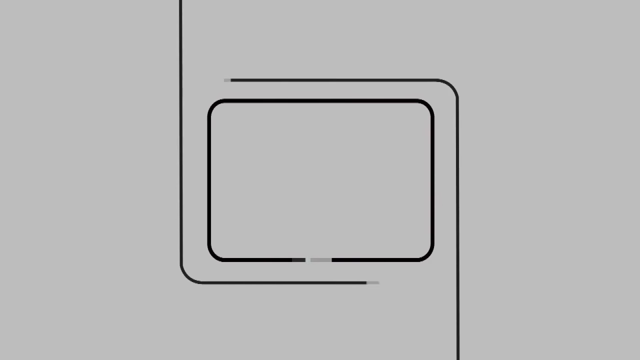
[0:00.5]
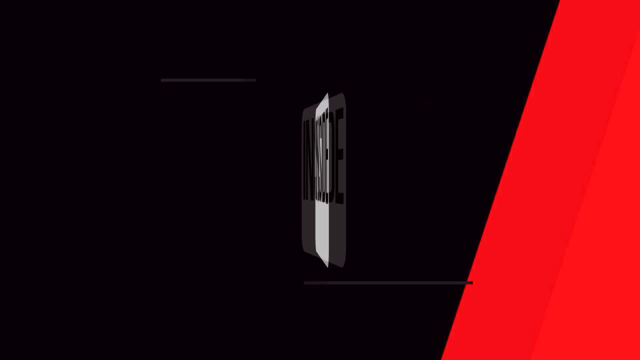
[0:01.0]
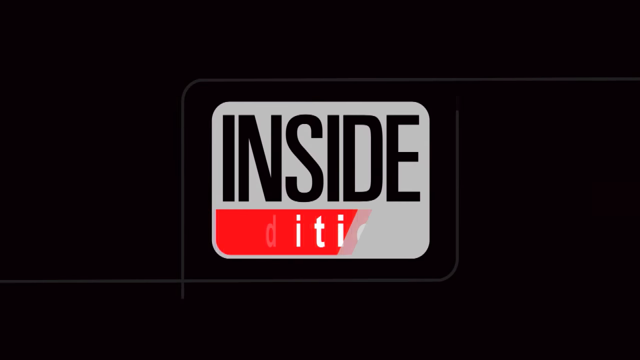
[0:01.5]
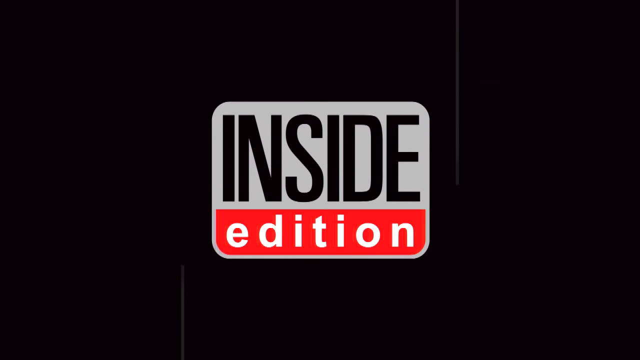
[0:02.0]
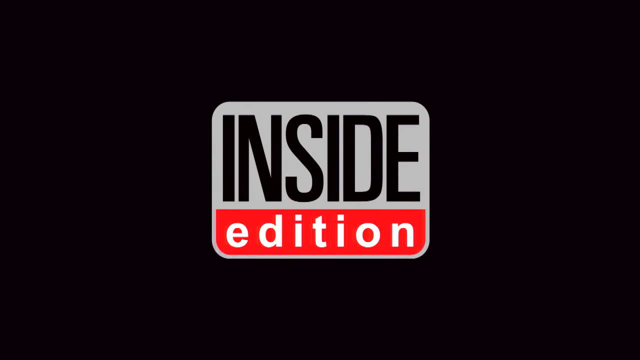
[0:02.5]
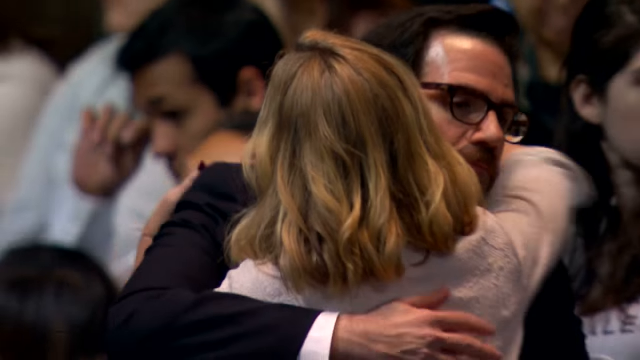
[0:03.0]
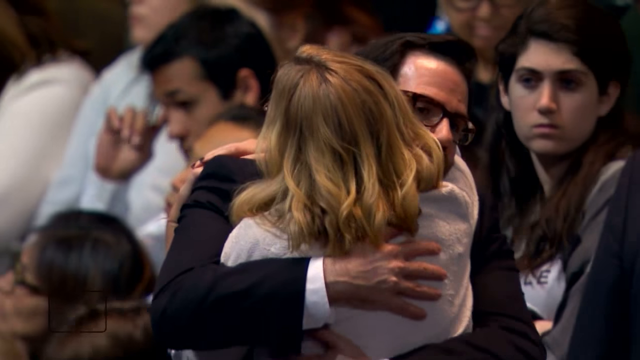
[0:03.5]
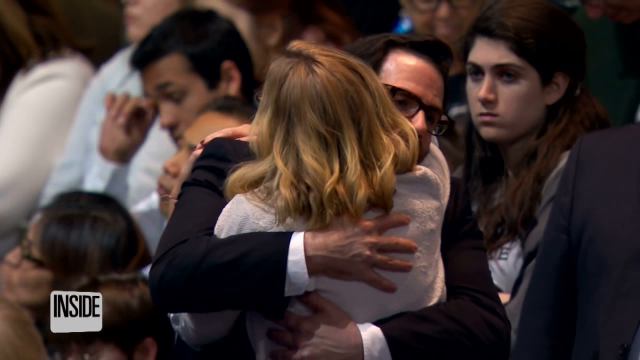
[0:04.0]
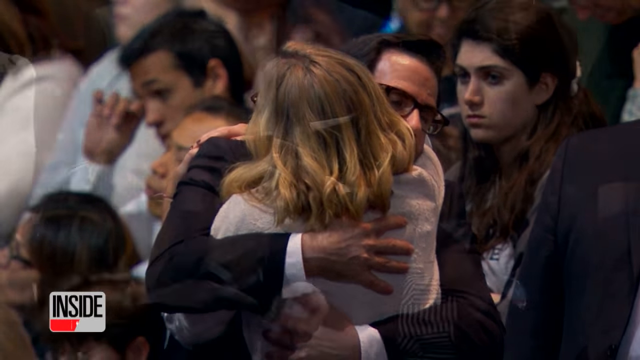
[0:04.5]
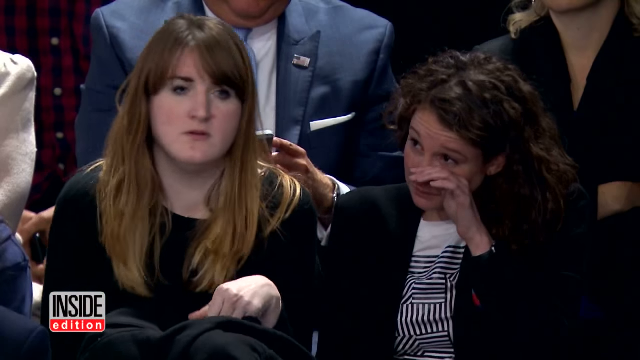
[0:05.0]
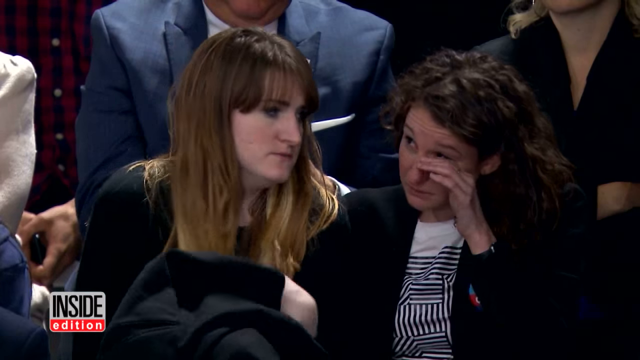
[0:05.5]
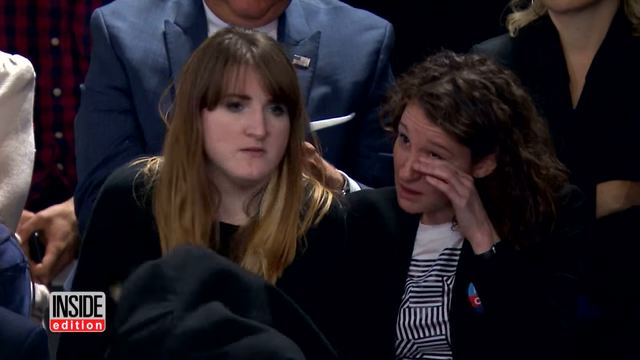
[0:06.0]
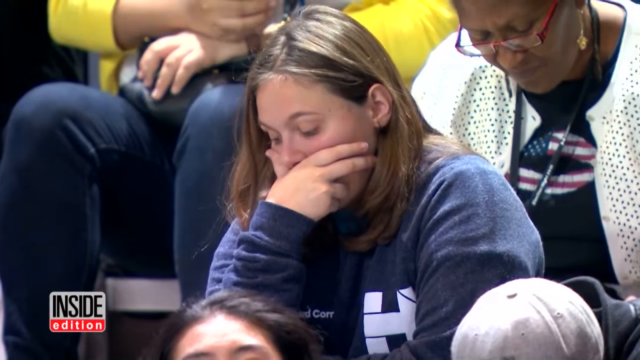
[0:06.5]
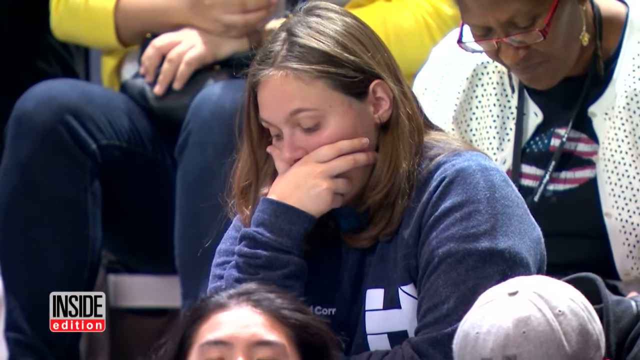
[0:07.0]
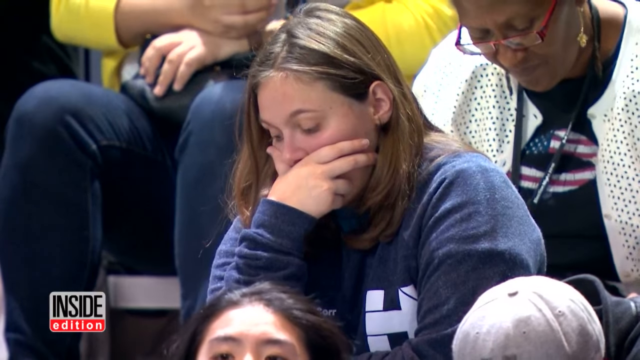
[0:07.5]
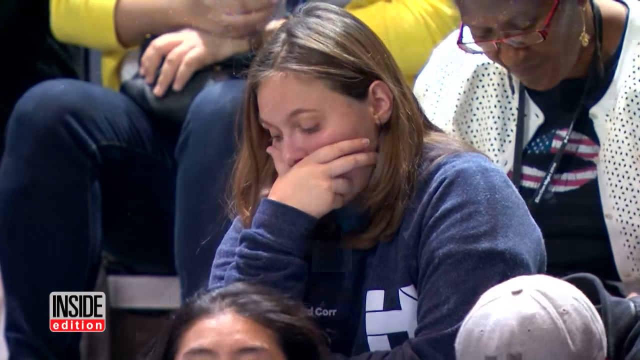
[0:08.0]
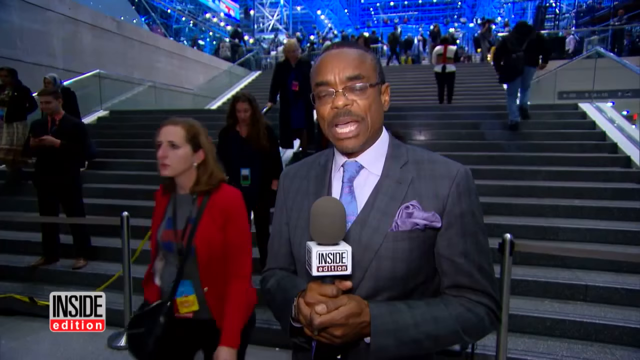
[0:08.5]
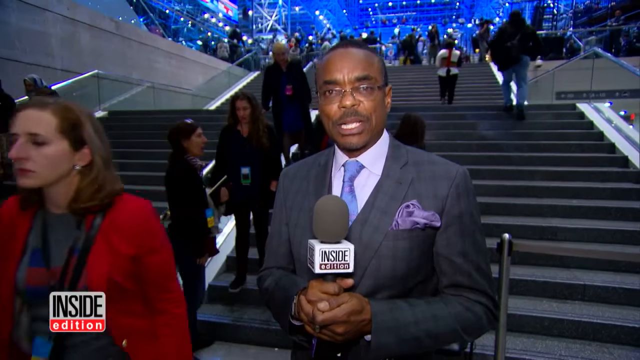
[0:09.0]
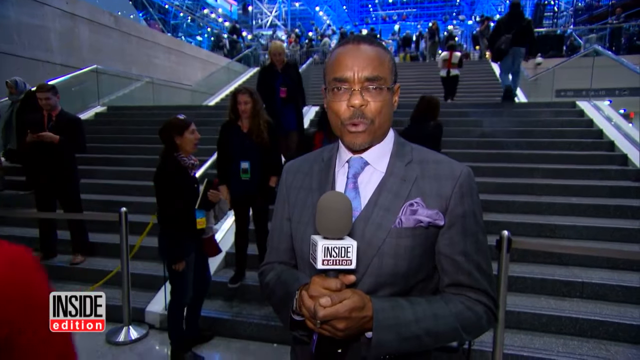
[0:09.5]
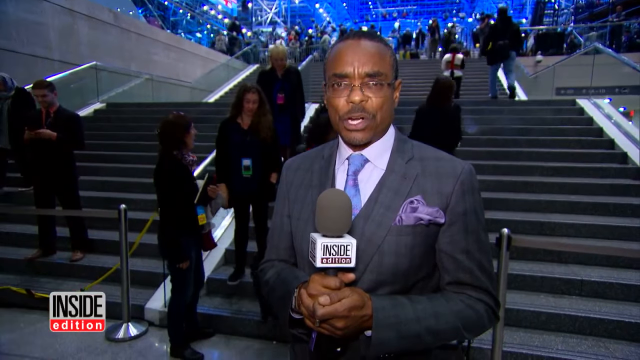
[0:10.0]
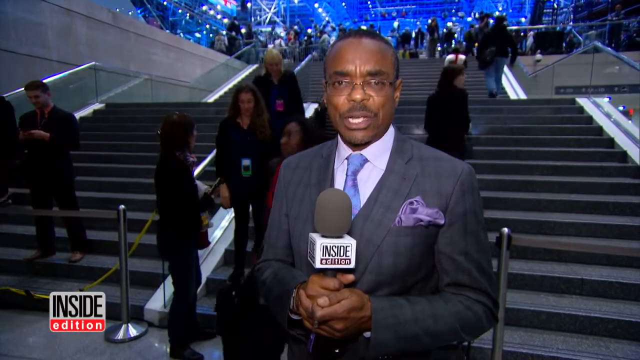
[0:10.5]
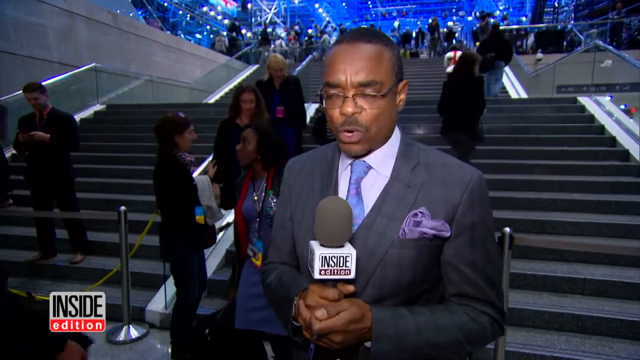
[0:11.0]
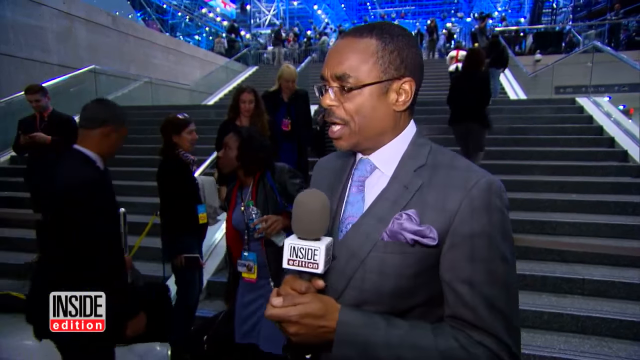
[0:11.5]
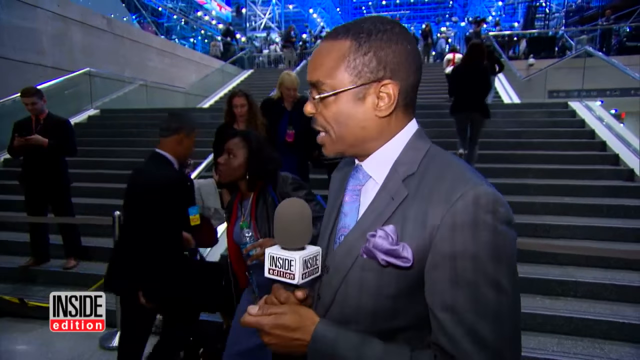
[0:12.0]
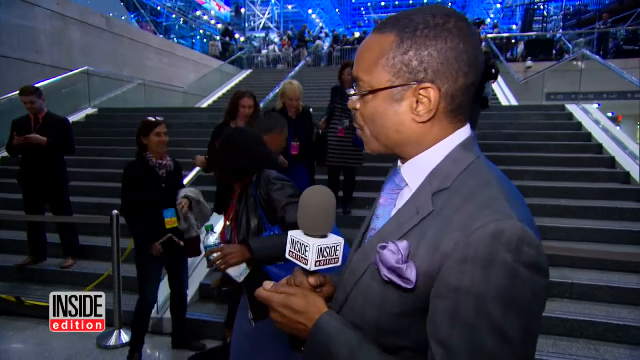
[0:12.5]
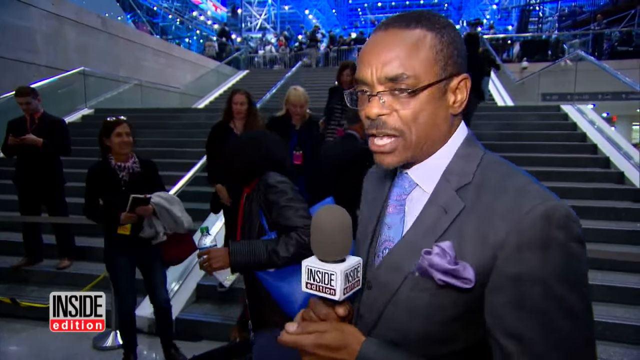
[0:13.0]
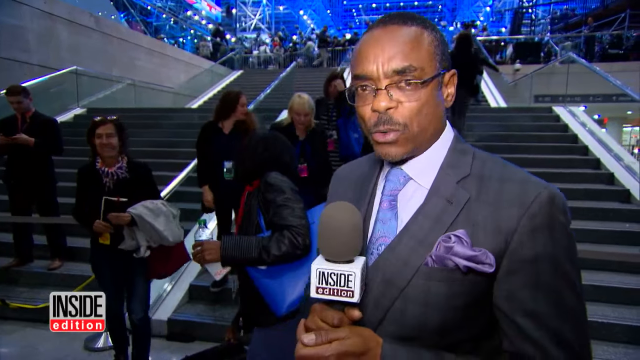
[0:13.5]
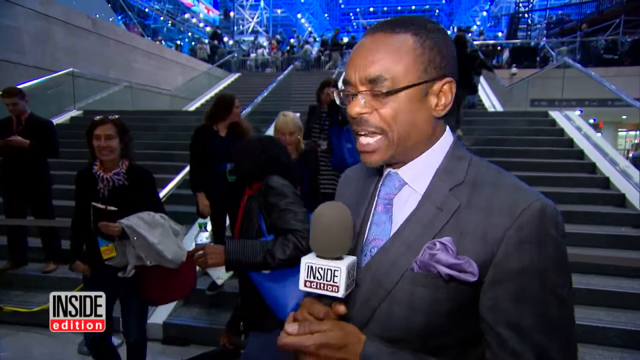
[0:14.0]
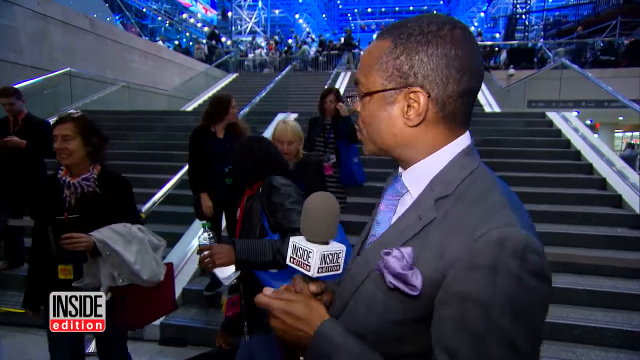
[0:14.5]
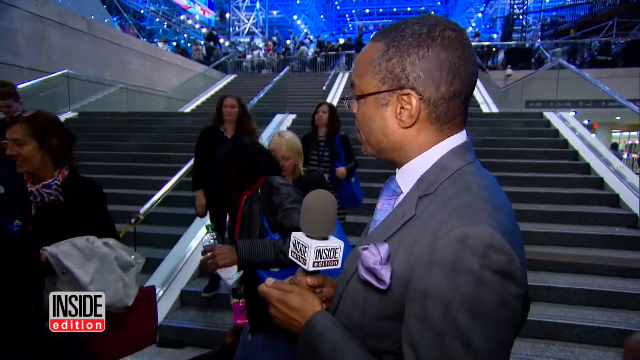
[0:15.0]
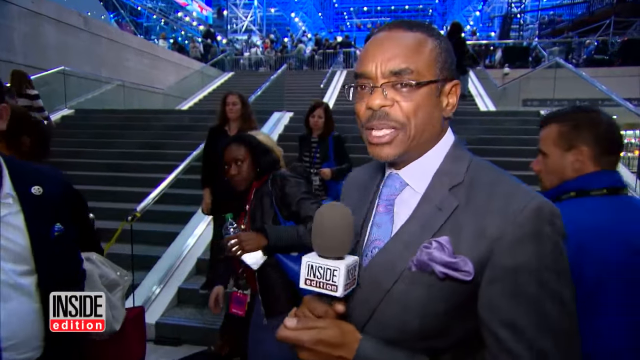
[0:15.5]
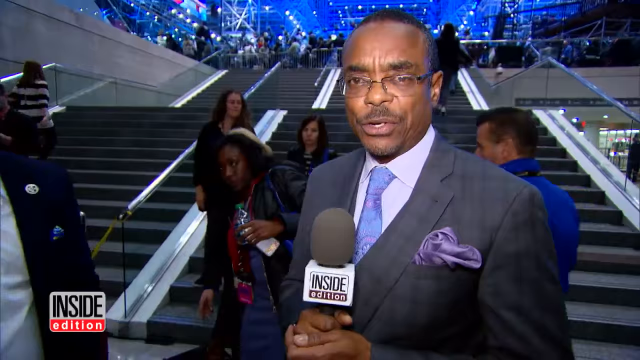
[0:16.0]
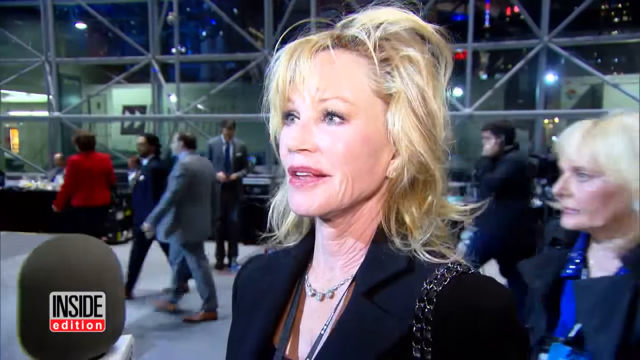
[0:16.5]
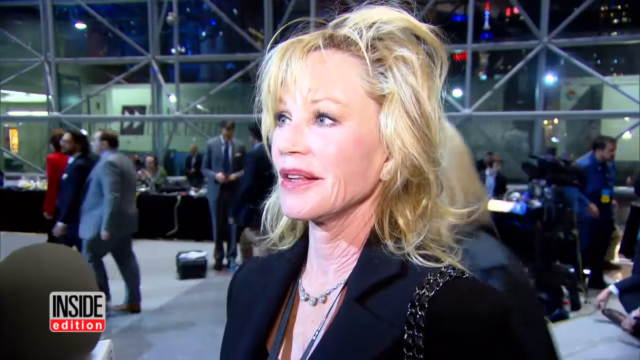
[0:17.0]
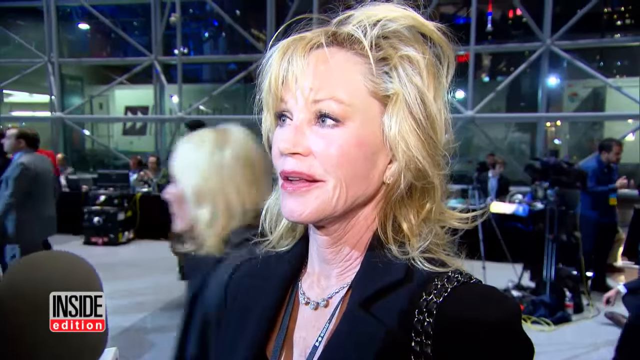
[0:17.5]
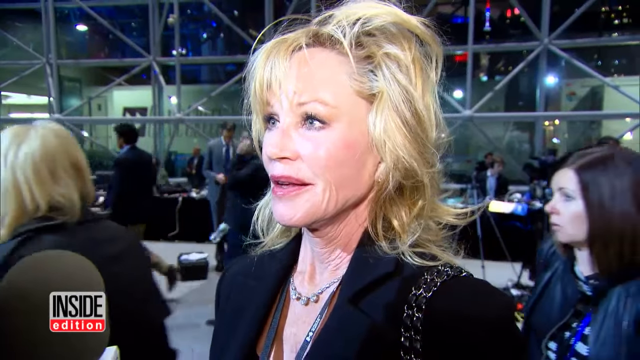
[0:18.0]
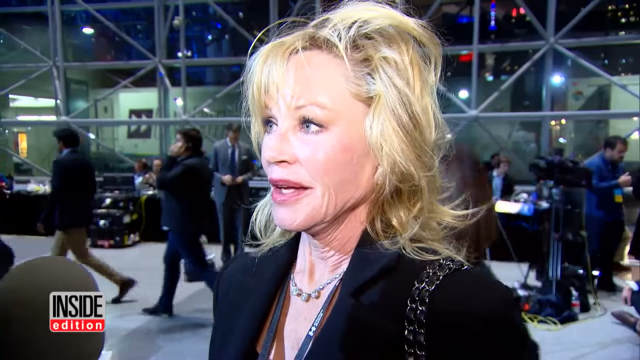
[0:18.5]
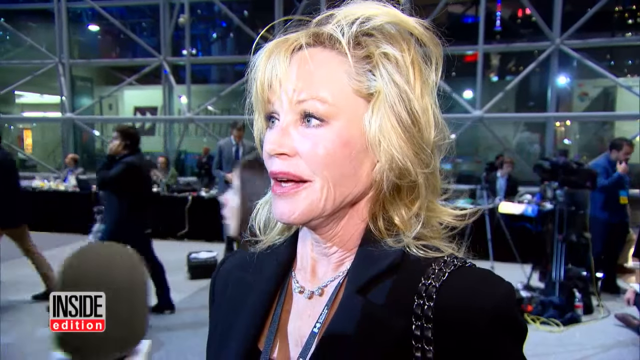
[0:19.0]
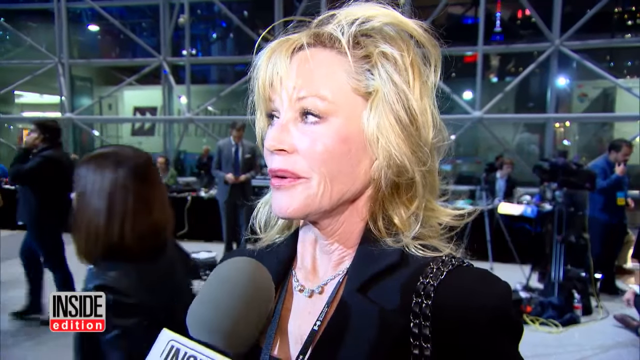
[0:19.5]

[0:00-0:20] The Inside Edition logo appears, kind of superimposed onto the screen, suggesting this is a segment from the TV show. Two people hug, apparently in some sort of auditorium, and then two people in the stands seem almost to be crying. The video cuts to another woman in the stands who looks like she is crying. A Black man holding an Inside Edition microphone stands in front of a long staircase and appears to be explaining what is going on. The shot then shifts to an older white woman speaking into the microphone. At the top, the video's title reads "Cher: Donald Trump winning presidential" before being cut off.